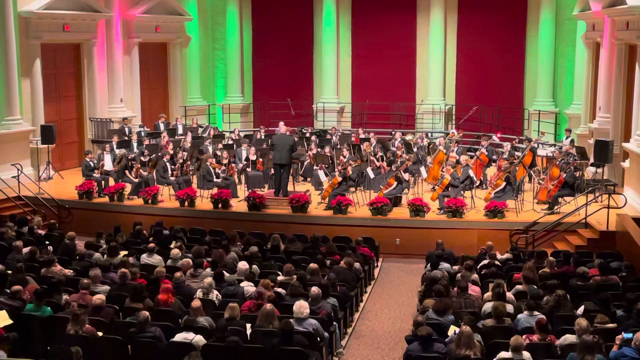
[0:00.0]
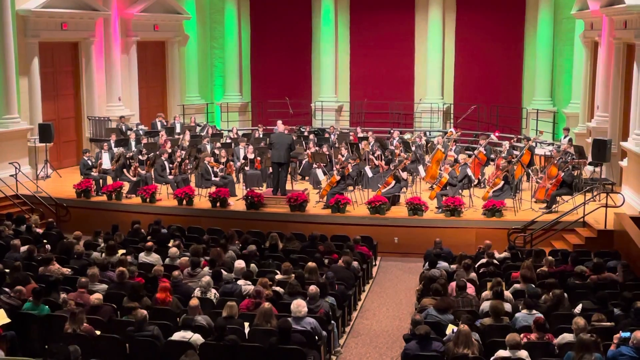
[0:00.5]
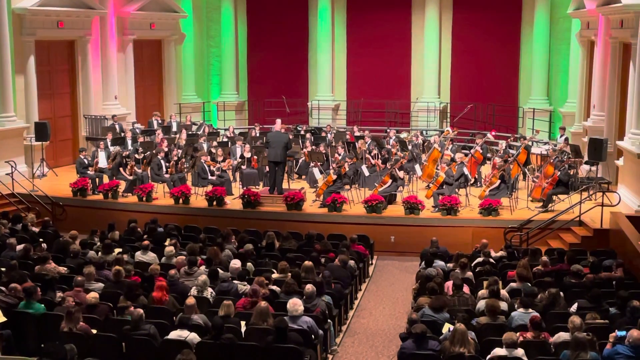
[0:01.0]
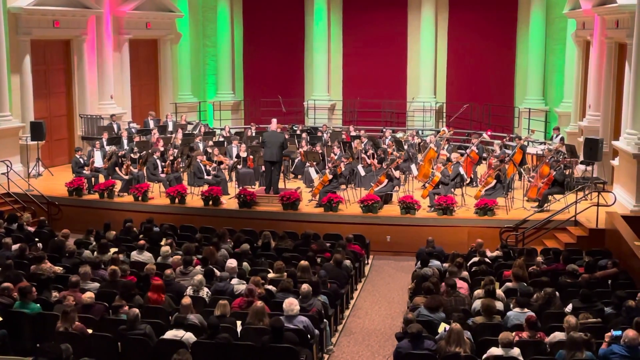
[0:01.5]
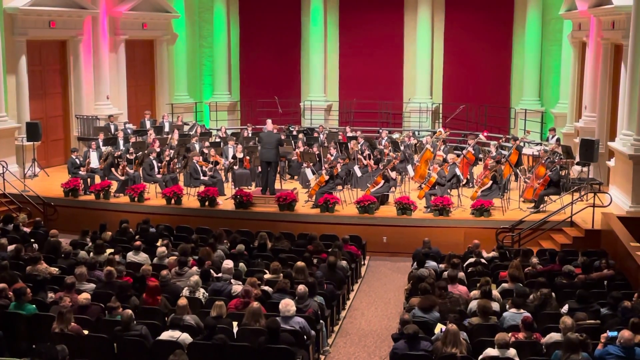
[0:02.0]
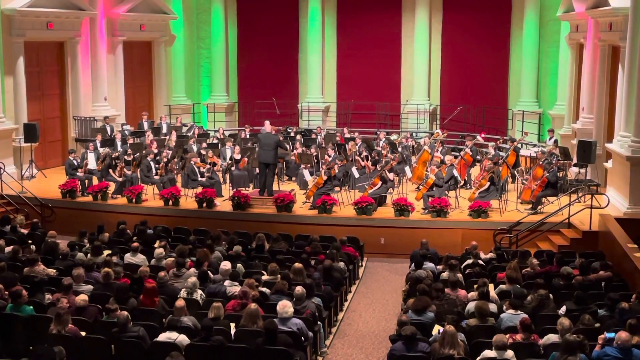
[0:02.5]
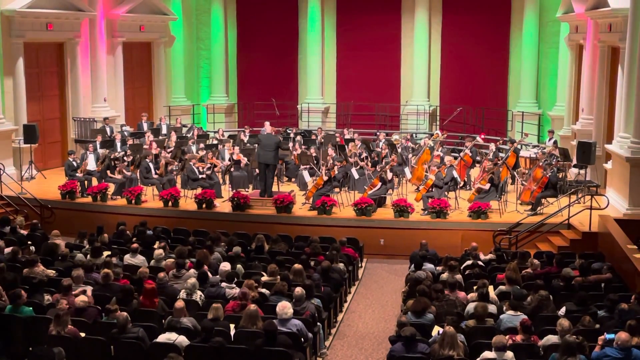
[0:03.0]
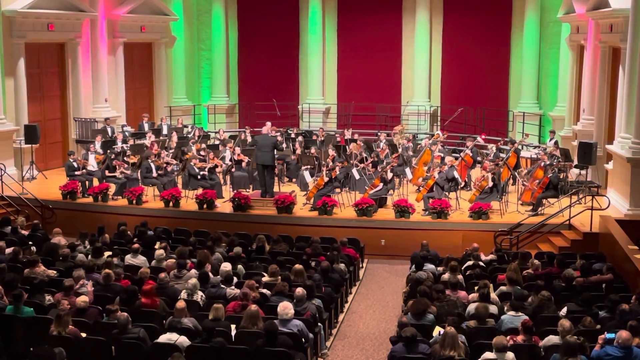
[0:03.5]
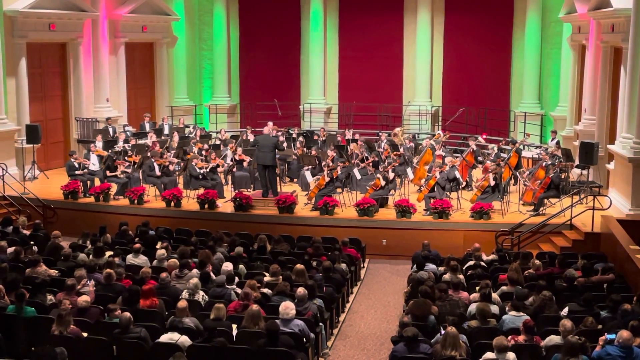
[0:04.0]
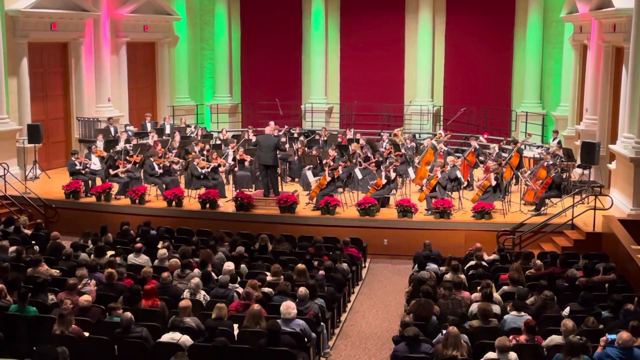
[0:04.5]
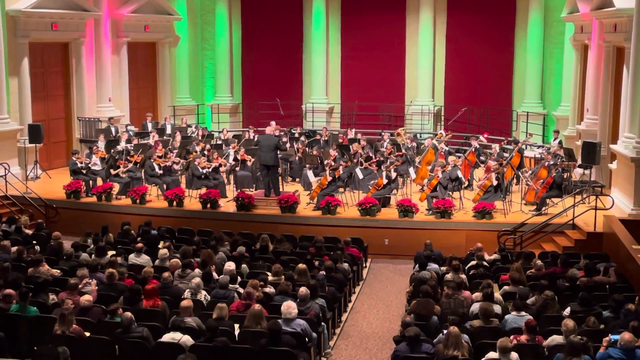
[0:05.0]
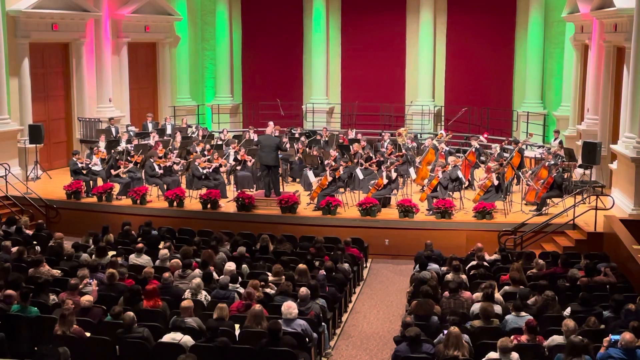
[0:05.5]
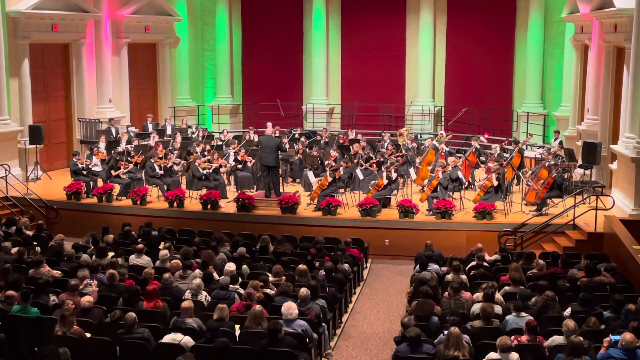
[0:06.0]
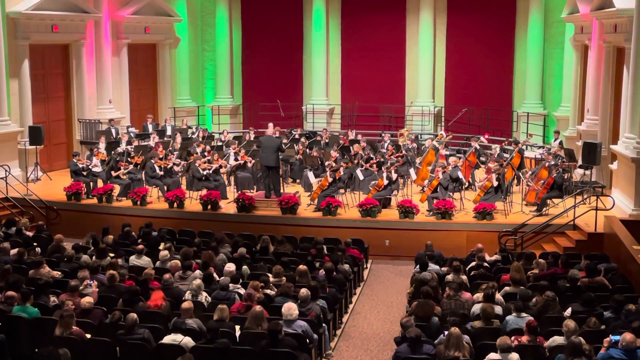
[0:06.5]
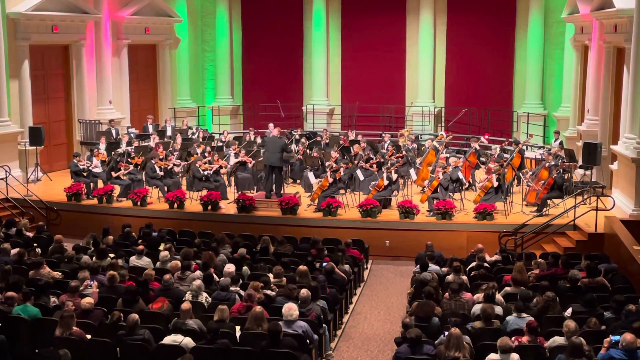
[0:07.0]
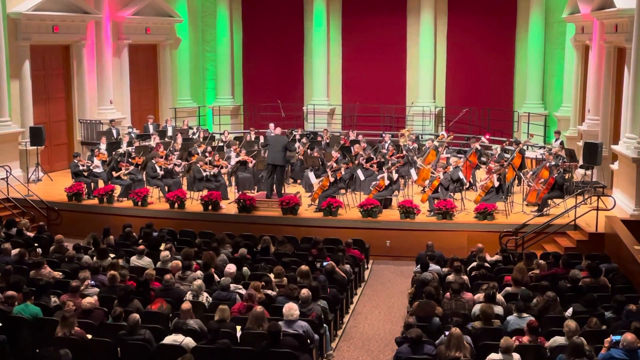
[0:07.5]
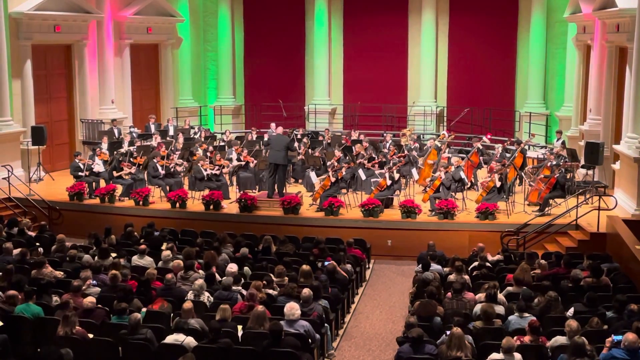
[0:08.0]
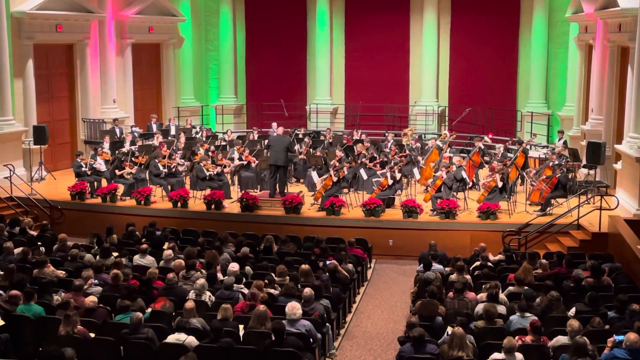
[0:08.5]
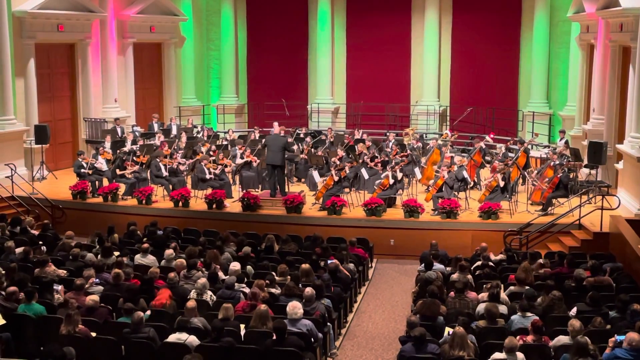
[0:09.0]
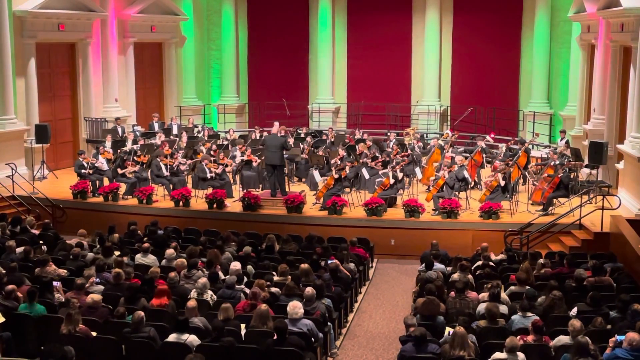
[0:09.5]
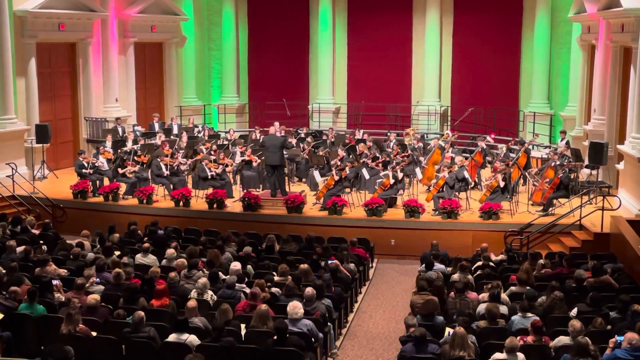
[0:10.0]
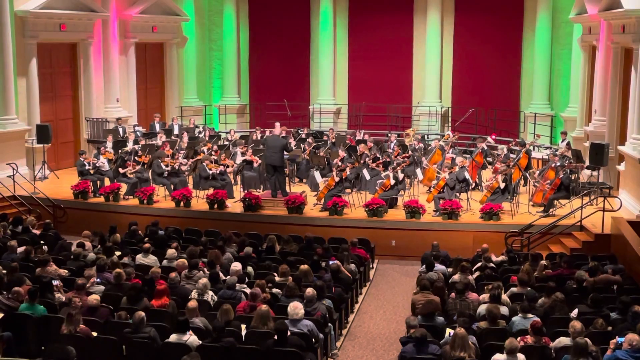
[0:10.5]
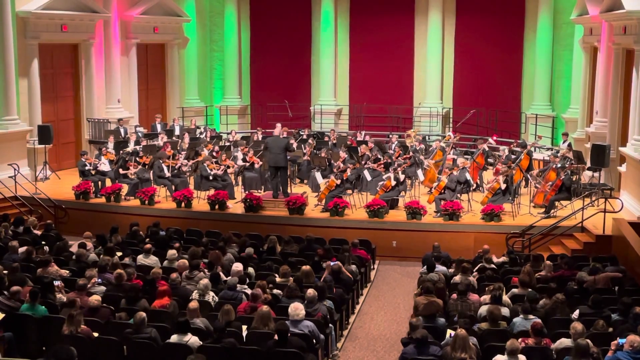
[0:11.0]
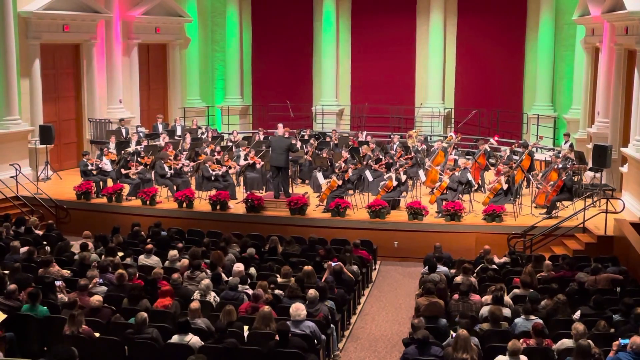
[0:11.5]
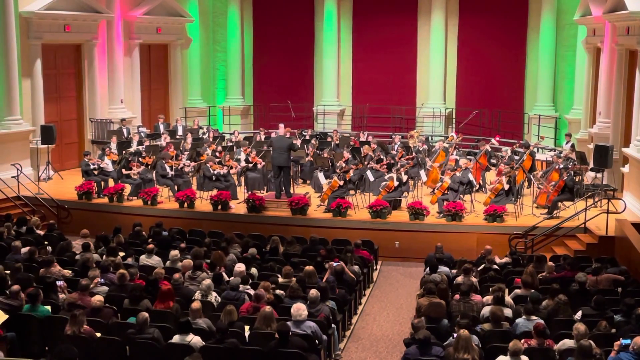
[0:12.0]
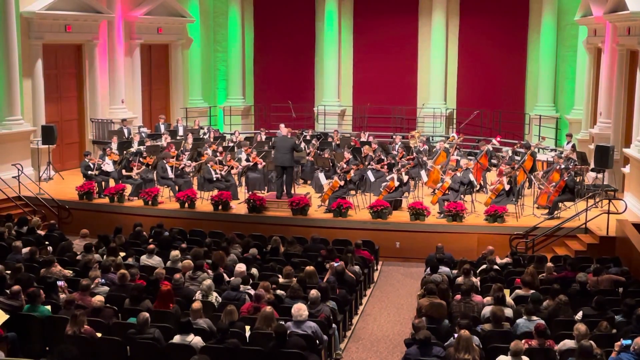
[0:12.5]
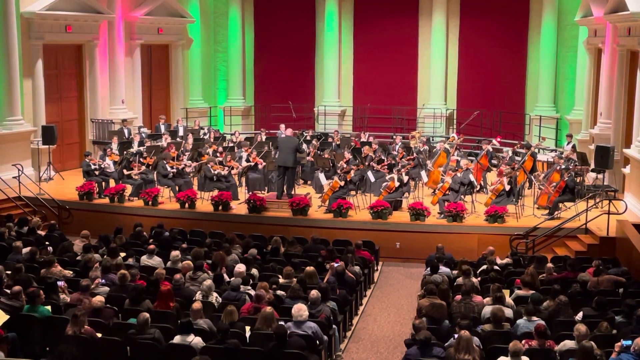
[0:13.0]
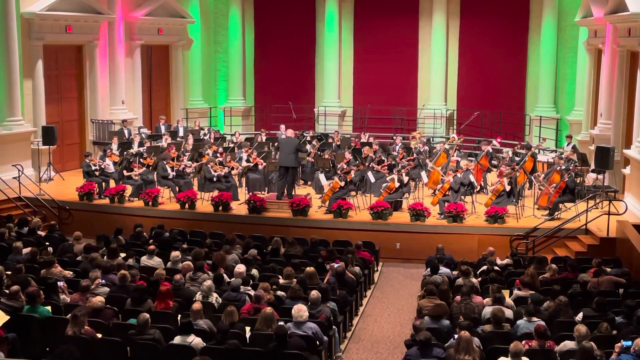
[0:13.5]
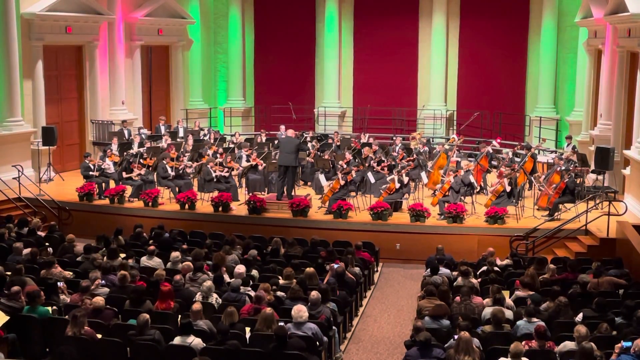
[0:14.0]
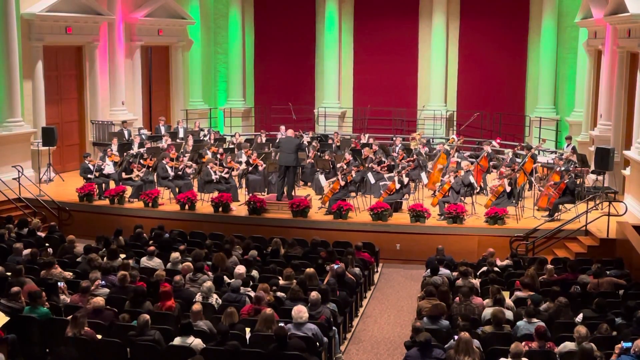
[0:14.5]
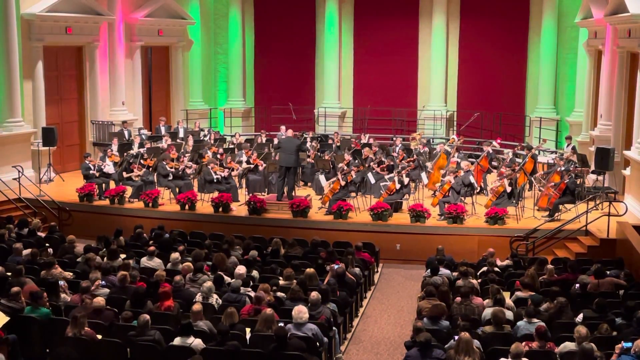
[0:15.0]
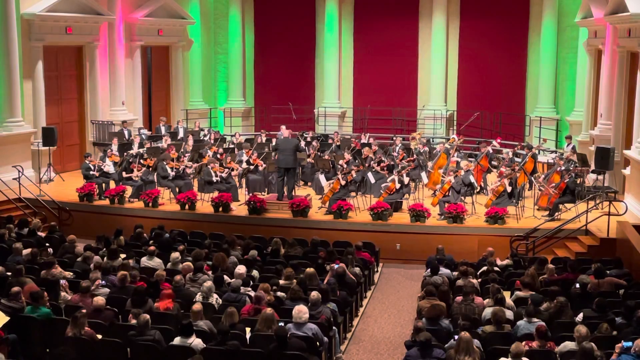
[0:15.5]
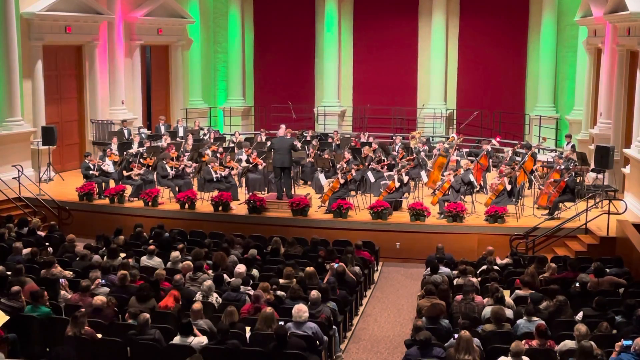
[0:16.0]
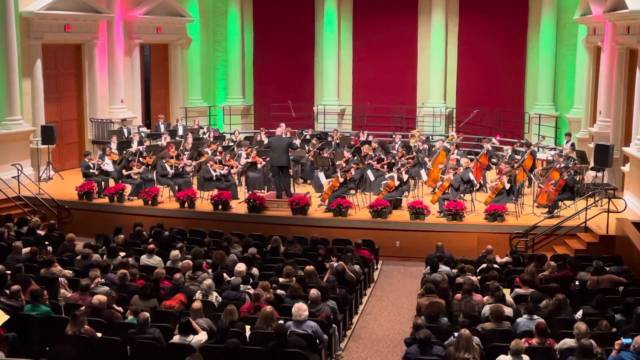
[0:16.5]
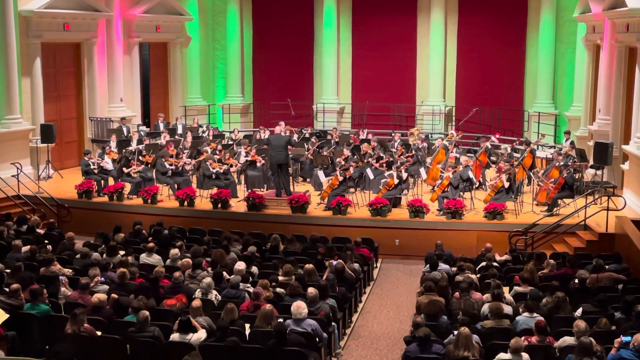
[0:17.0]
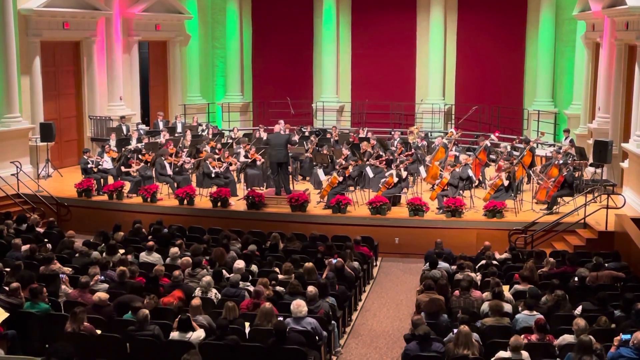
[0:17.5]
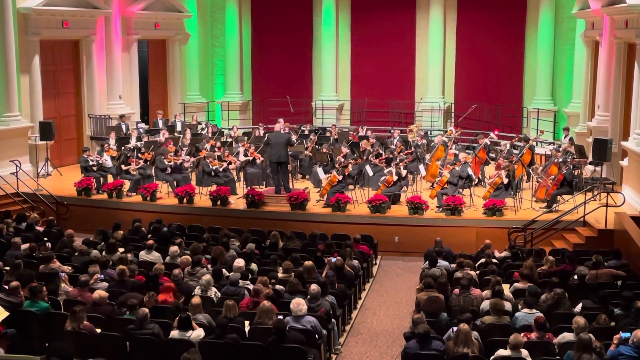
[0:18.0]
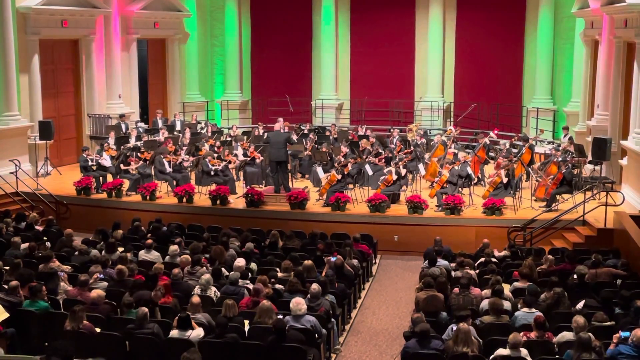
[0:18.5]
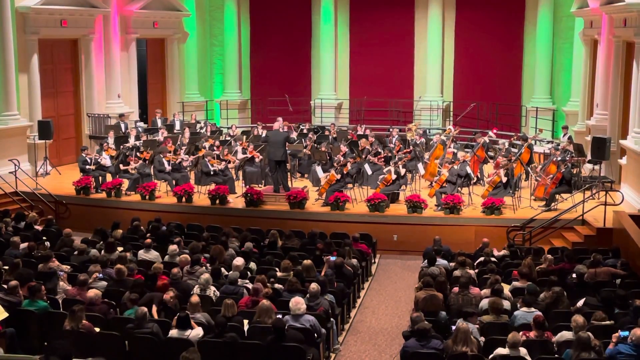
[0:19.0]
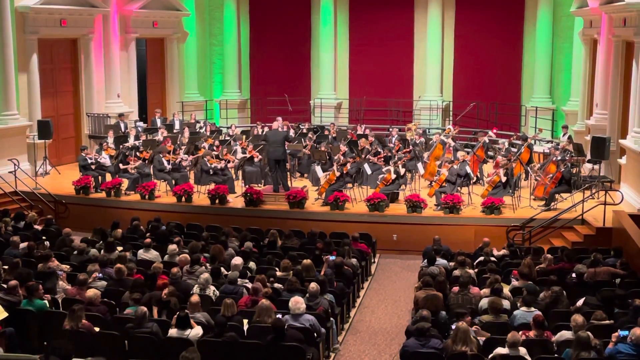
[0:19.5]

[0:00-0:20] An audience watches people on a stage playing instruments. A conductor wearing a black suit leads them, and red flowers line the stage. Green and red lights shine on the pillars. The stage appears very full; not all the instruments are identifiable, but some of them are cellos. The crowd looks pretty happy and excited about the performance, and there are many people in the audience. Stairs on each side of the stage lead up or down, with rails on each side of the stairs. White pillars stand in the background against a red wall, and the stage is a wooden color. The audience appears very full, except possibly for some chairs in the front and second rows.